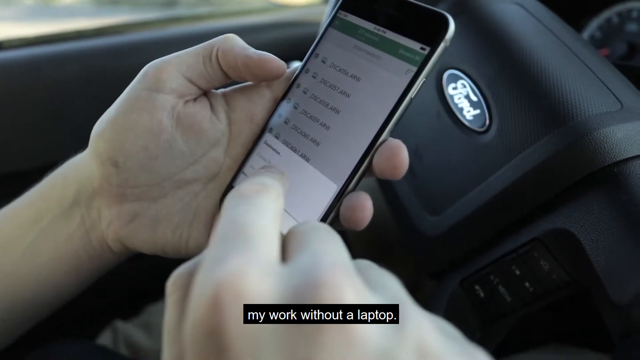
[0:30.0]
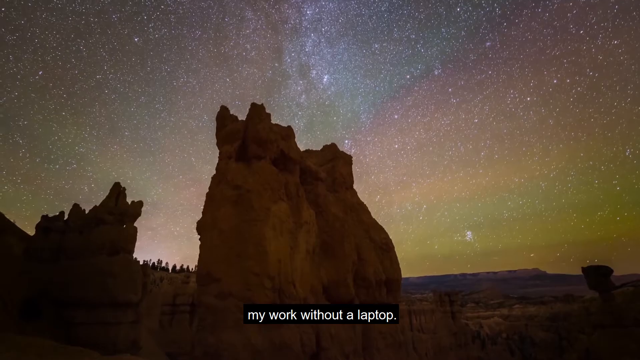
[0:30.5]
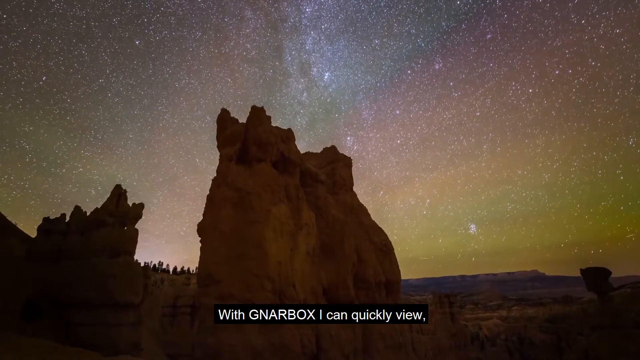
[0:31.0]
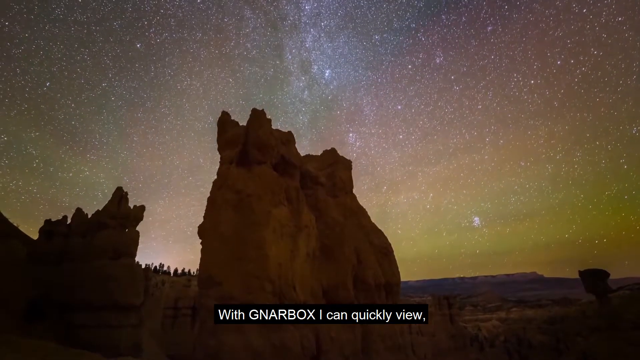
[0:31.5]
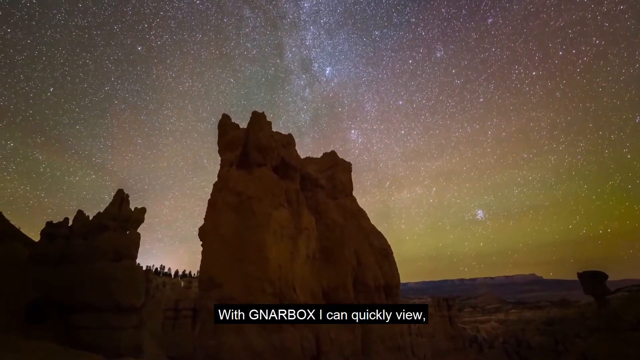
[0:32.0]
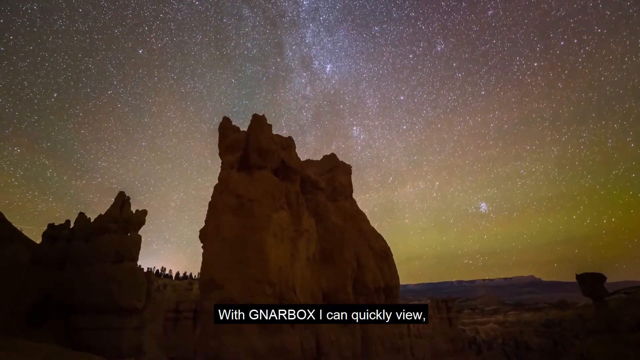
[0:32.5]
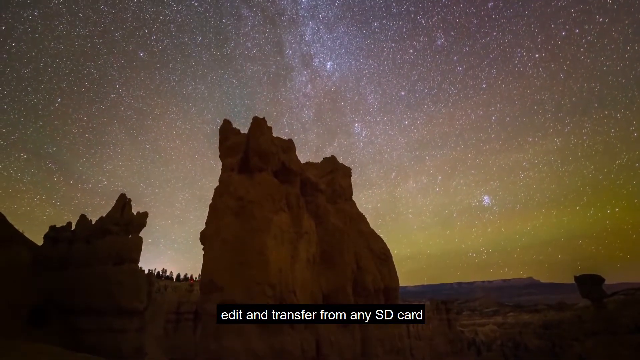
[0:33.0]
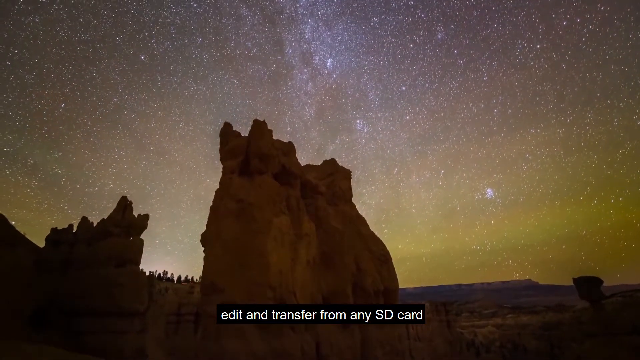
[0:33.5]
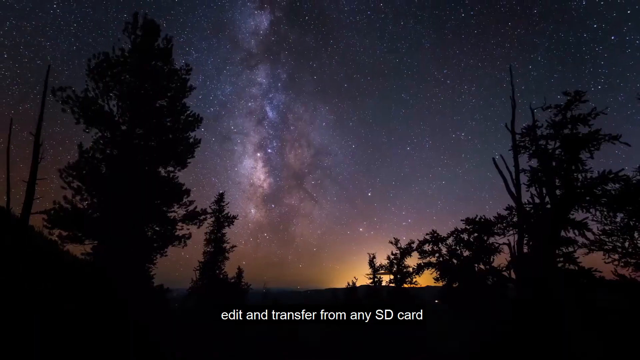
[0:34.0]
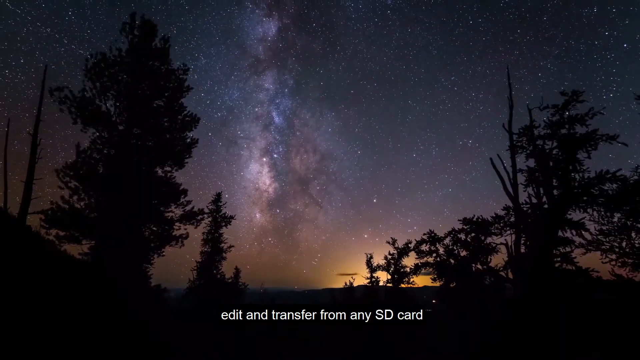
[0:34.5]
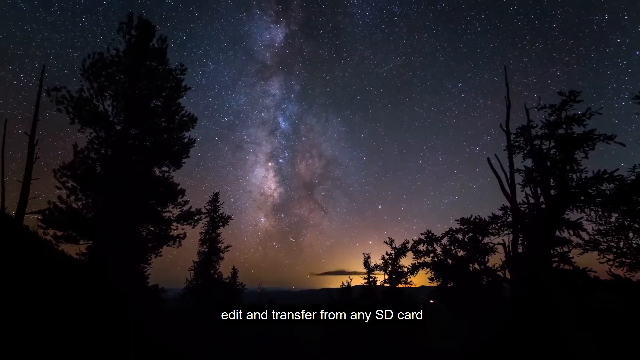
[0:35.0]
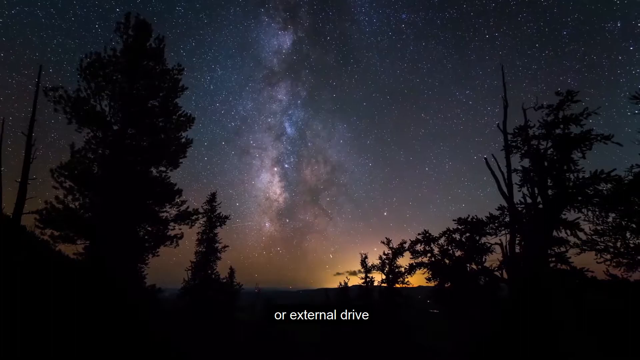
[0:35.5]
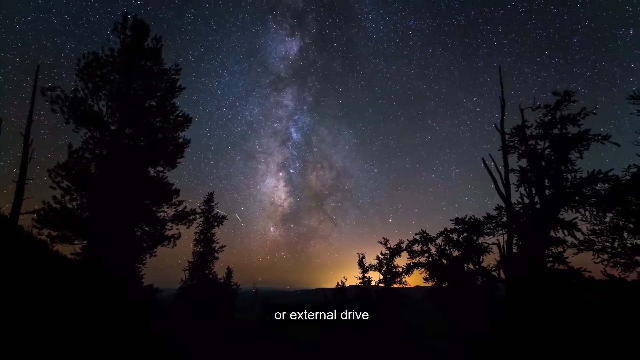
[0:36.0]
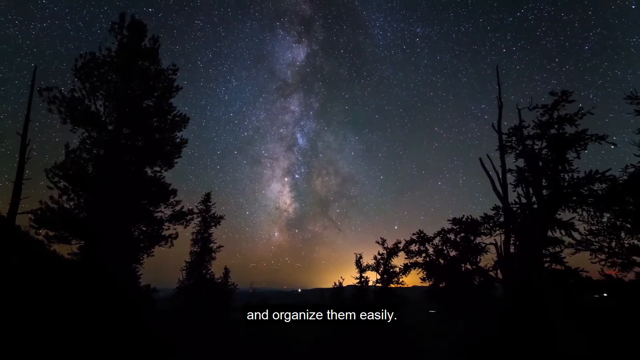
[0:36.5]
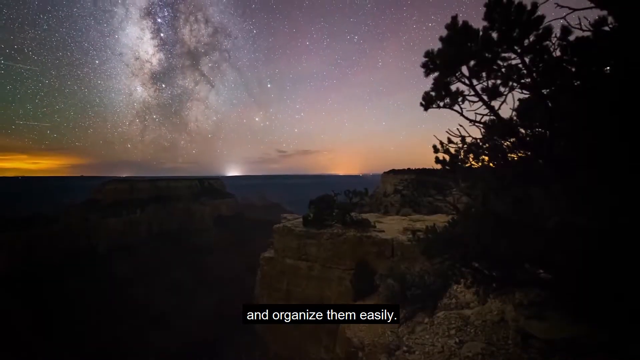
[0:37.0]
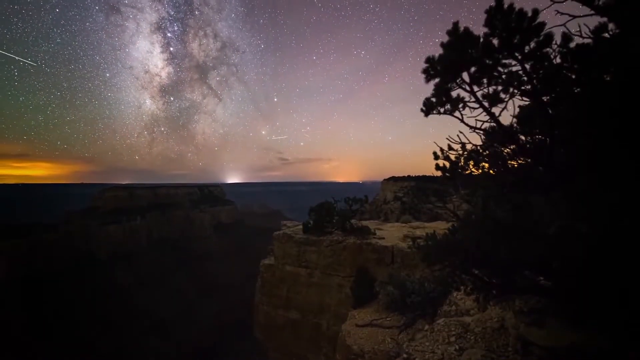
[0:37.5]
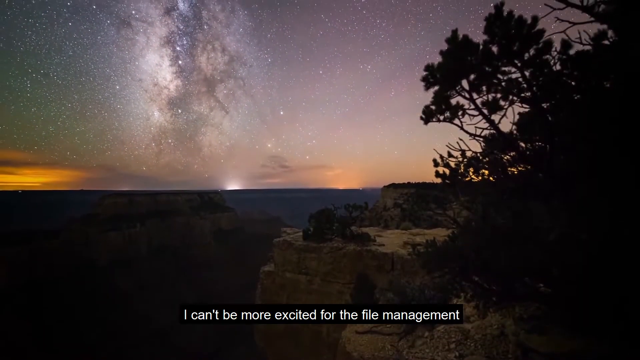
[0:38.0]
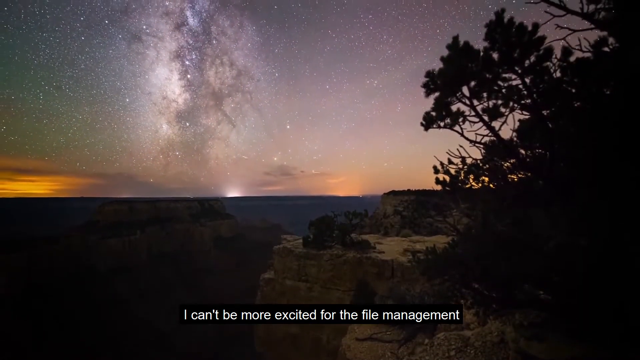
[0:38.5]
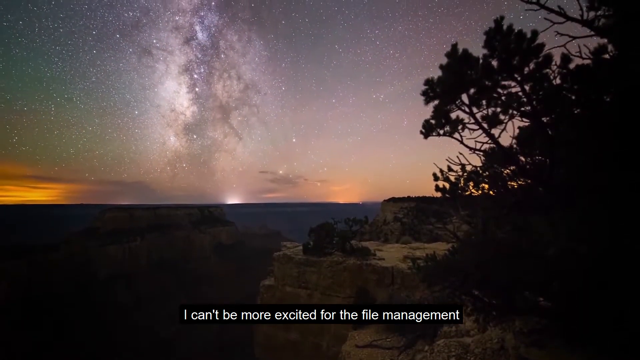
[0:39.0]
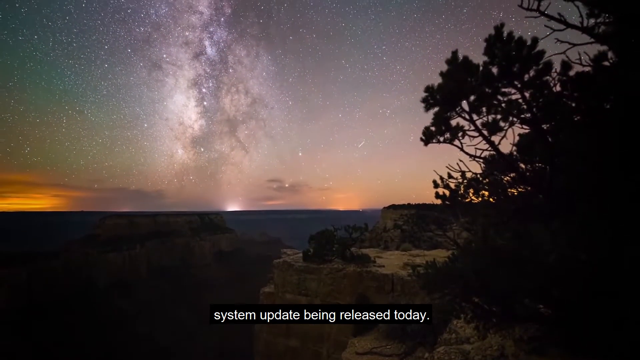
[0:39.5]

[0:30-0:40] More landscapes are shown. The first is a big, mountain-like rock in the middle with a night sky full of stars behind it, the stars moving in an almost circular shape. Next comes a shot of what seems to be woods, not very dense, with only a few trees, again under a sky full of stars. A shot of a canyon-like structure with the sky in the background follows. Meanwhile, he says his Gnarbox helps him edit and transfer from any SD card or external drive and organize every one of these photos easily.